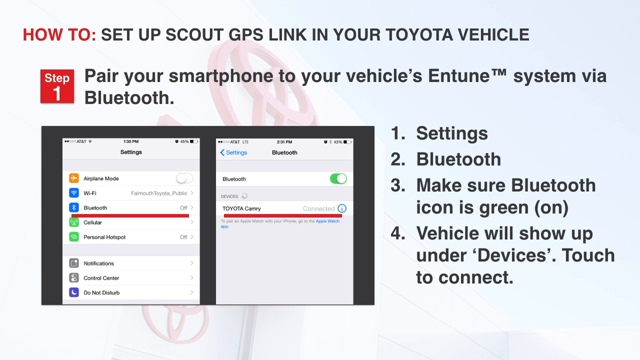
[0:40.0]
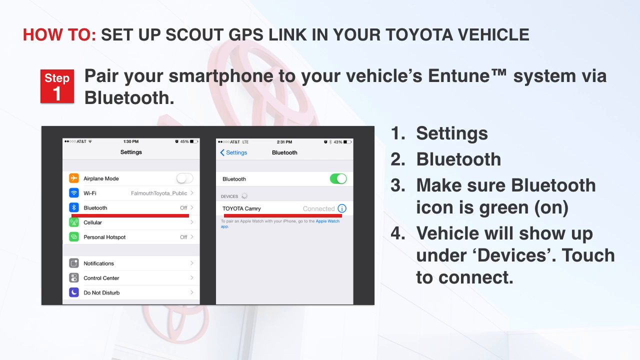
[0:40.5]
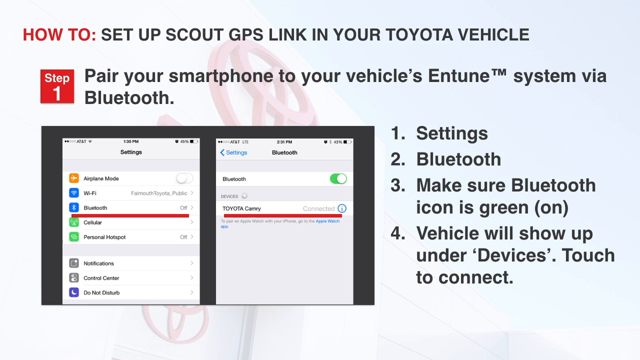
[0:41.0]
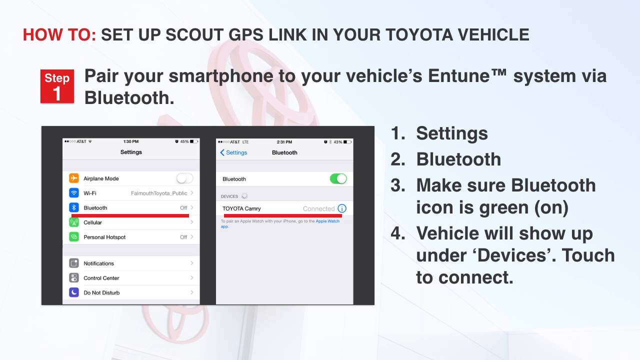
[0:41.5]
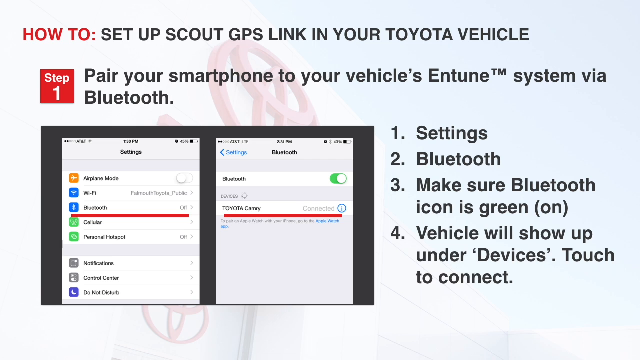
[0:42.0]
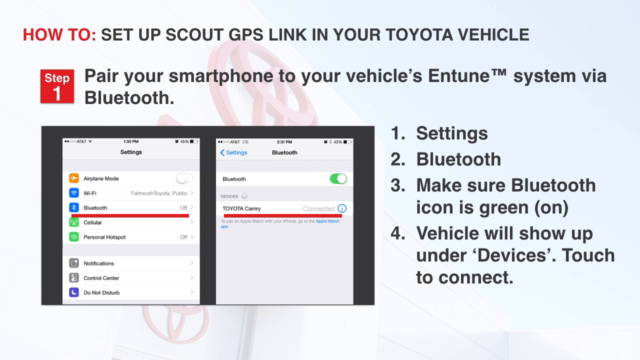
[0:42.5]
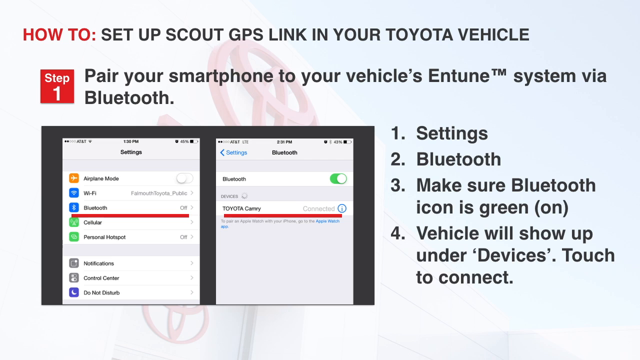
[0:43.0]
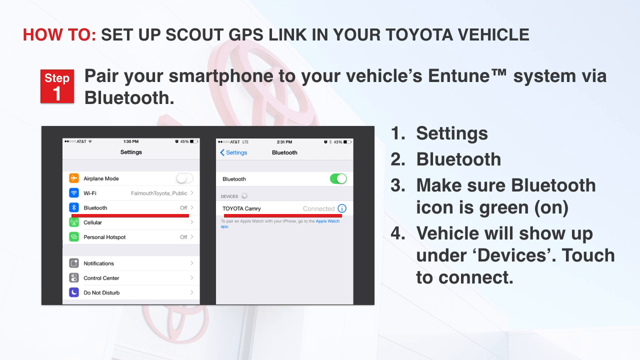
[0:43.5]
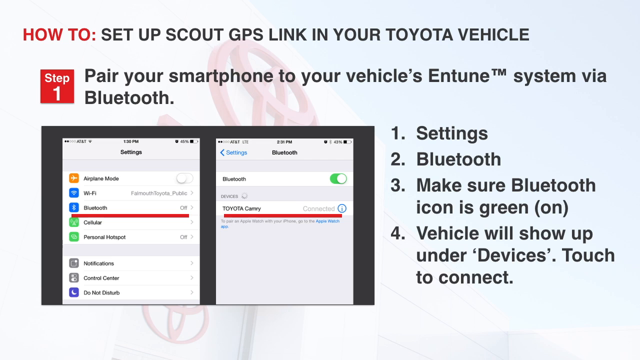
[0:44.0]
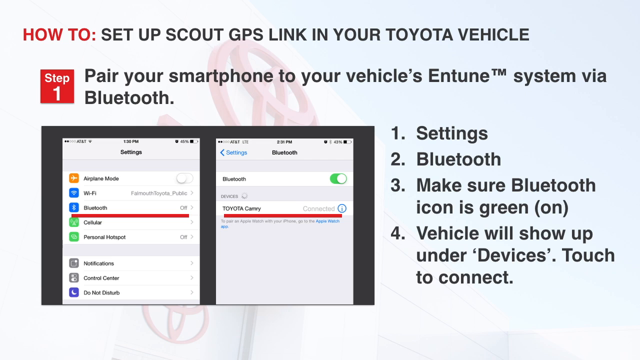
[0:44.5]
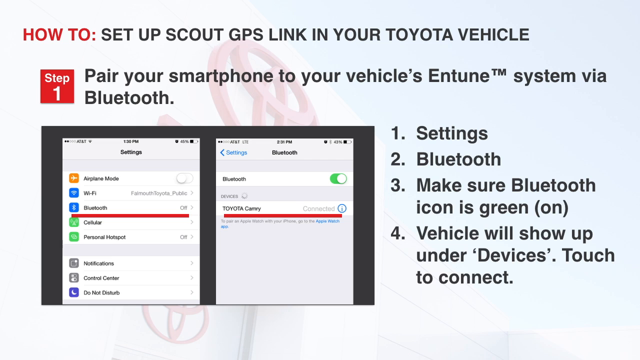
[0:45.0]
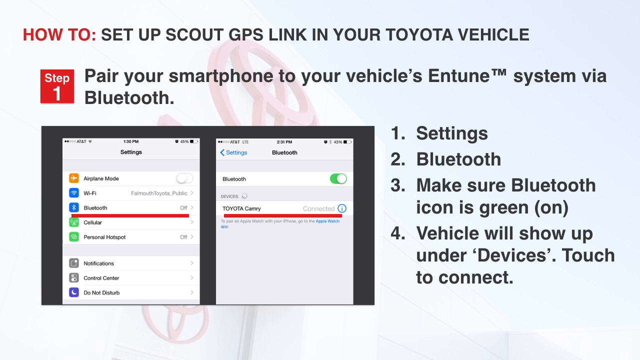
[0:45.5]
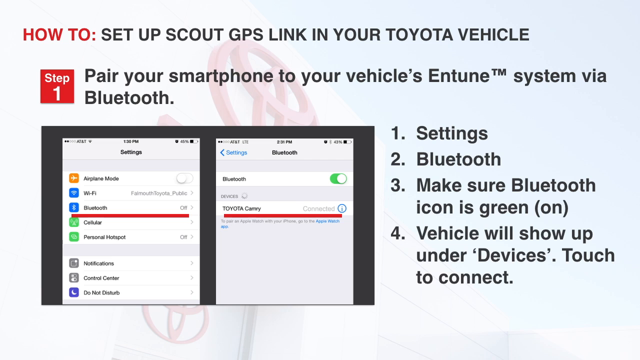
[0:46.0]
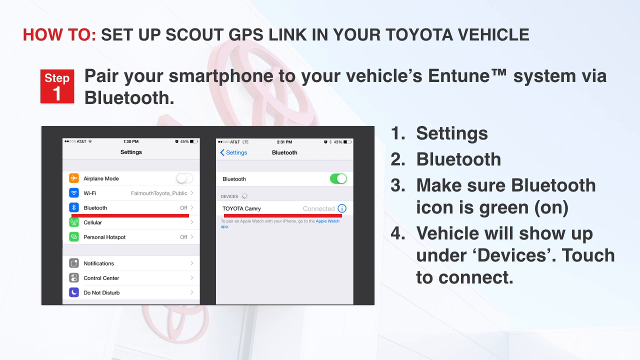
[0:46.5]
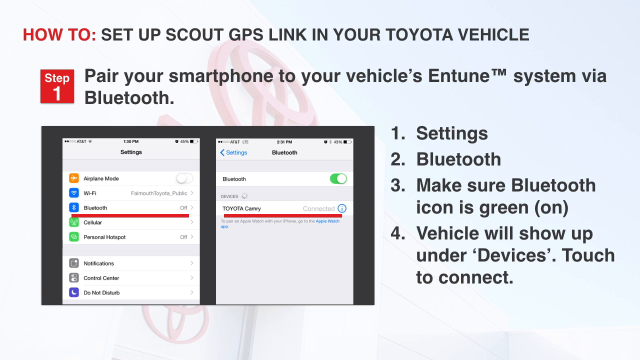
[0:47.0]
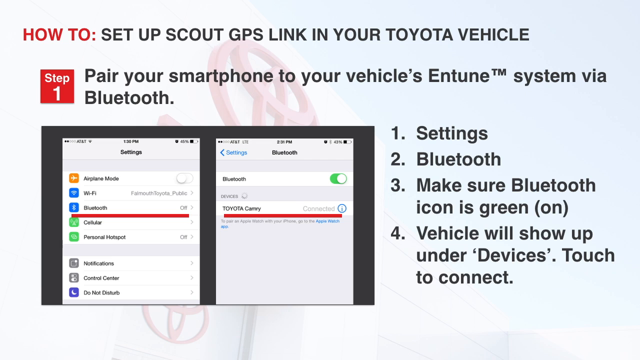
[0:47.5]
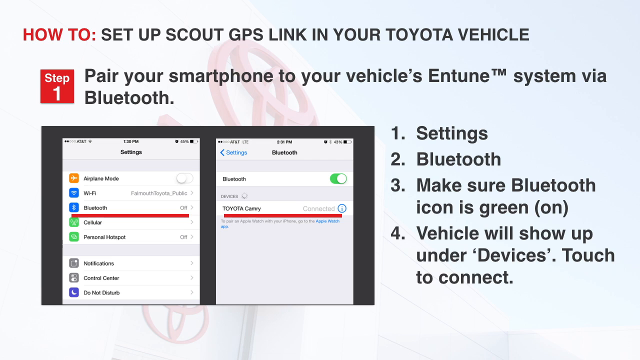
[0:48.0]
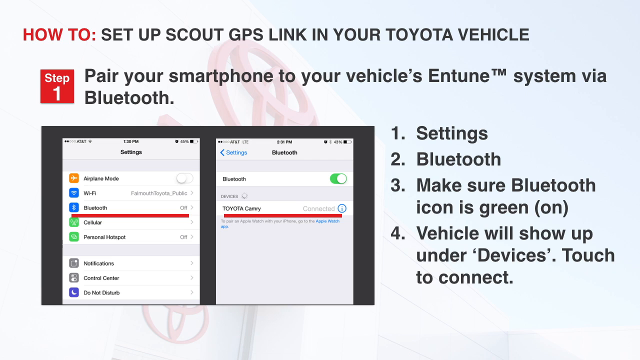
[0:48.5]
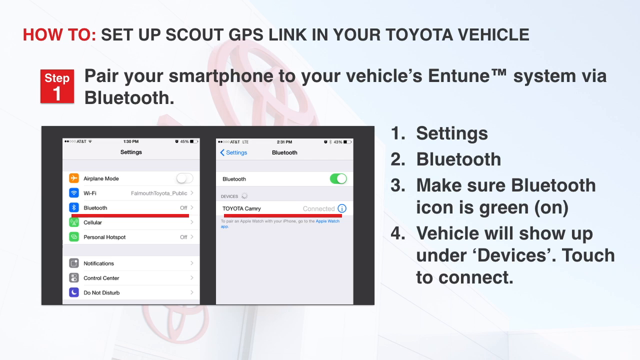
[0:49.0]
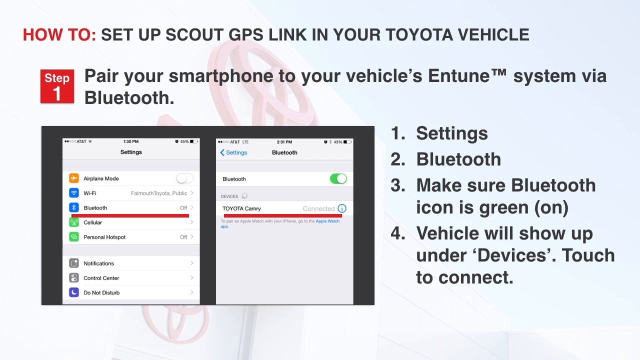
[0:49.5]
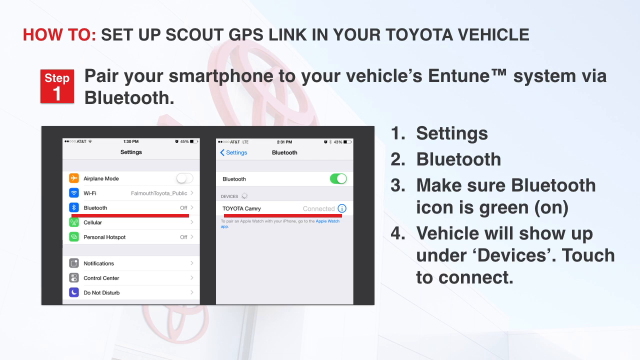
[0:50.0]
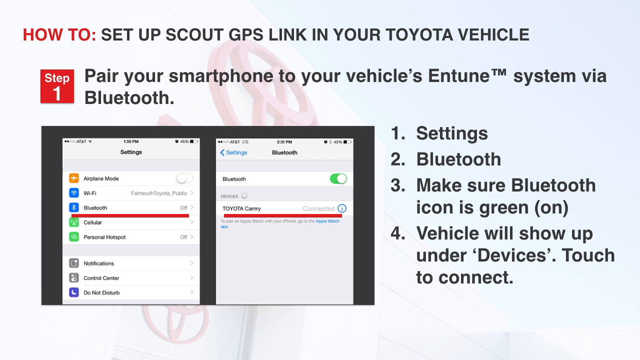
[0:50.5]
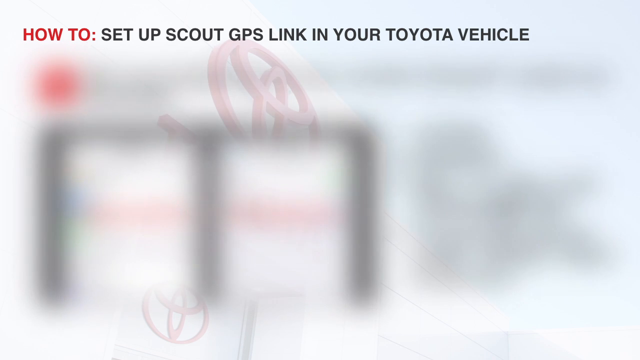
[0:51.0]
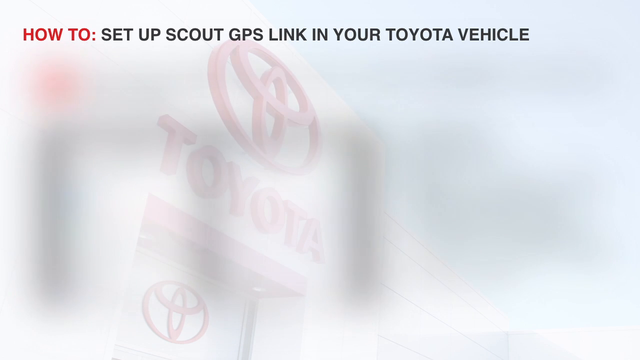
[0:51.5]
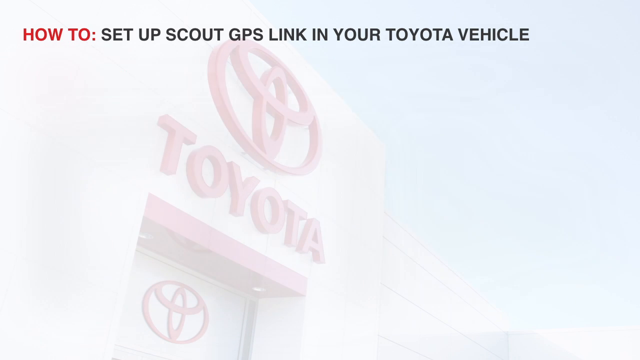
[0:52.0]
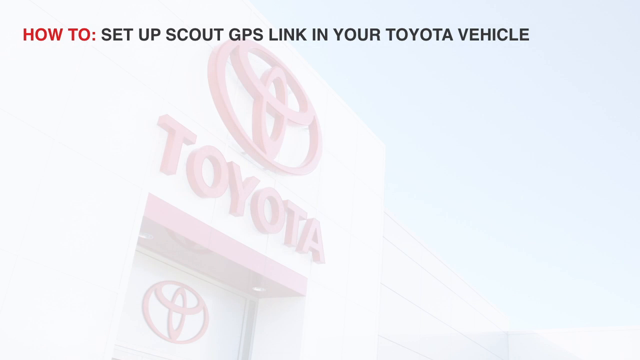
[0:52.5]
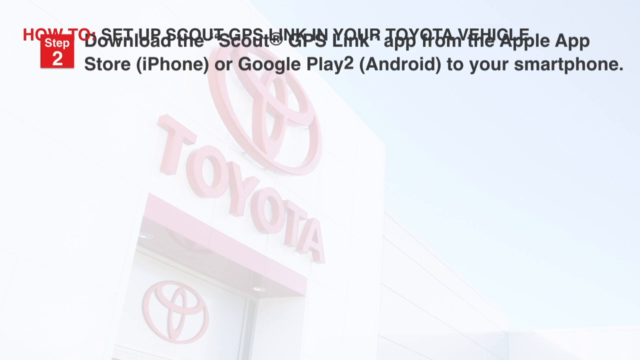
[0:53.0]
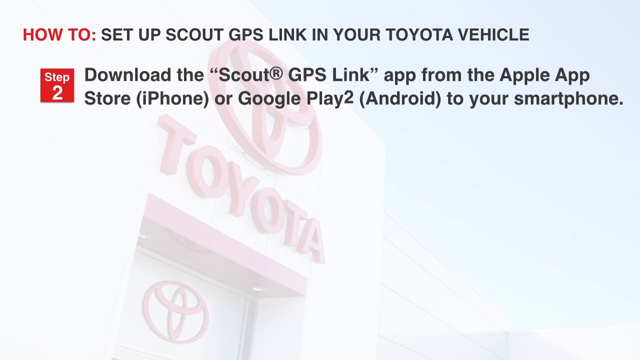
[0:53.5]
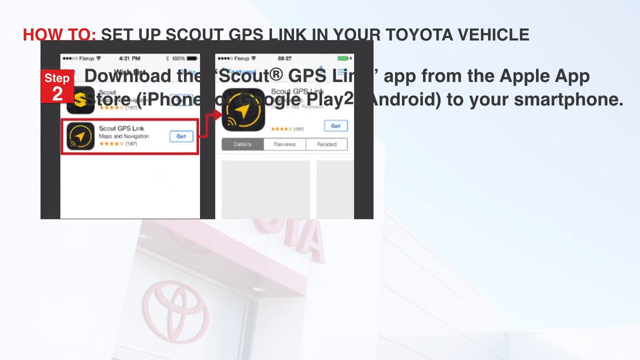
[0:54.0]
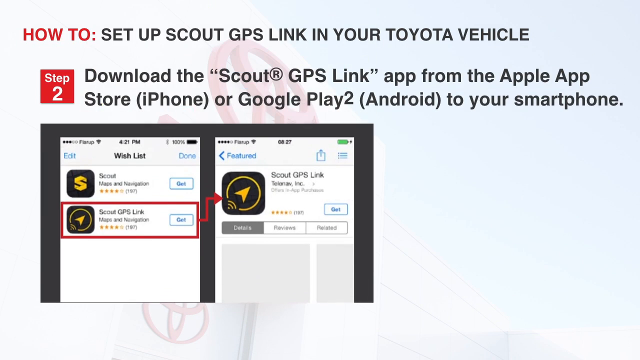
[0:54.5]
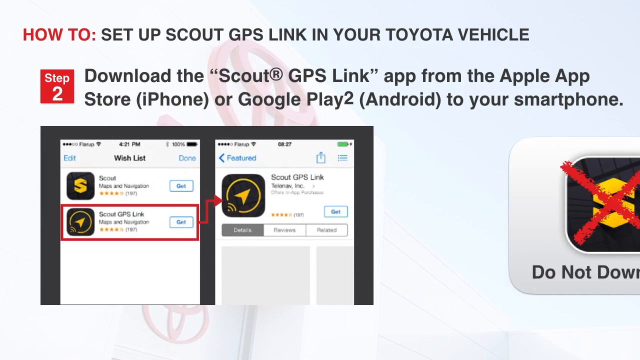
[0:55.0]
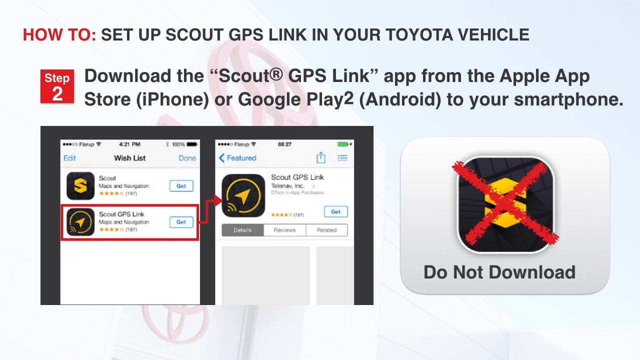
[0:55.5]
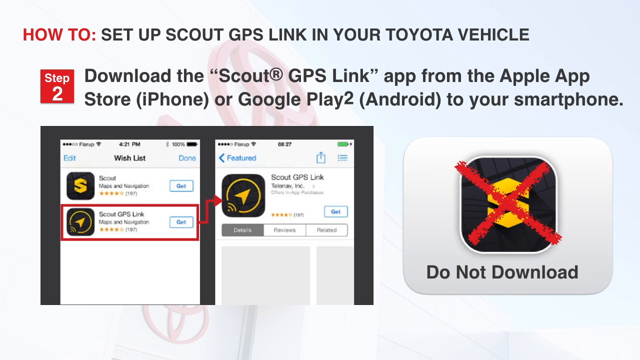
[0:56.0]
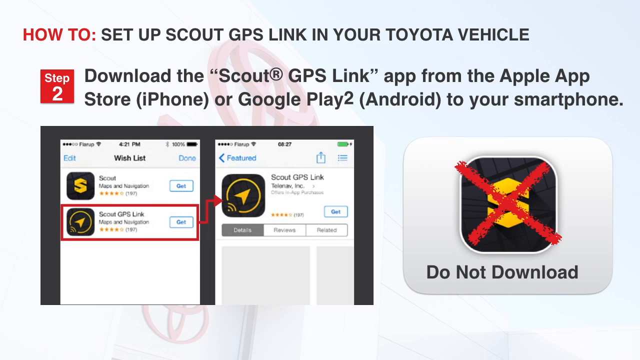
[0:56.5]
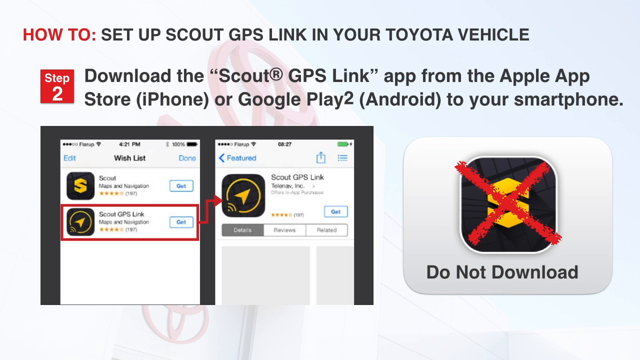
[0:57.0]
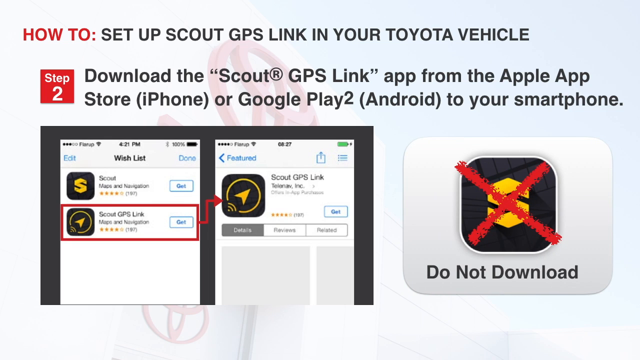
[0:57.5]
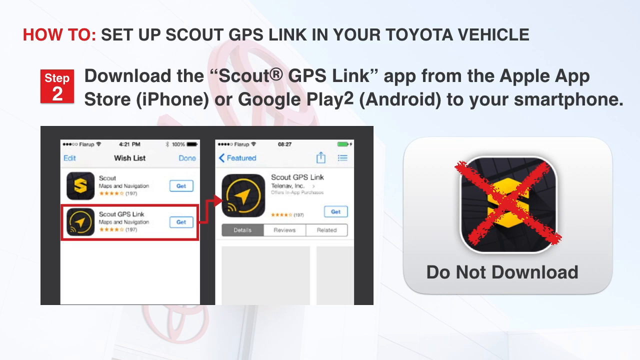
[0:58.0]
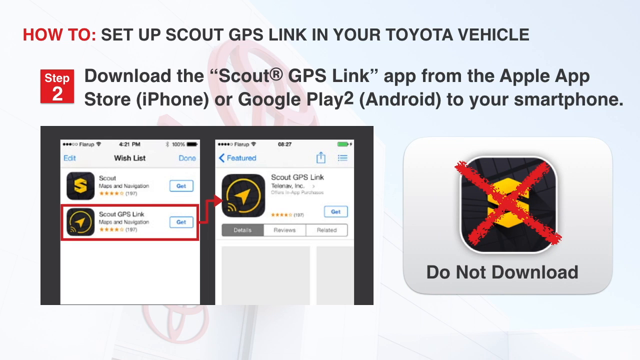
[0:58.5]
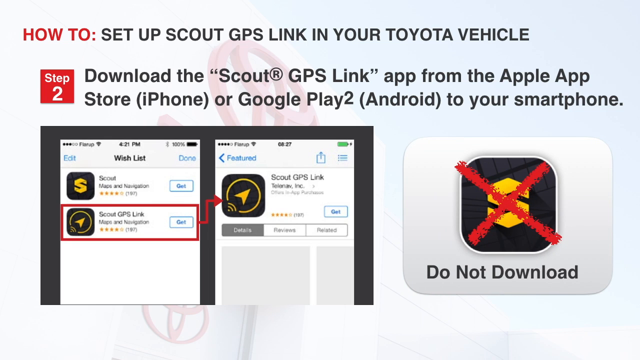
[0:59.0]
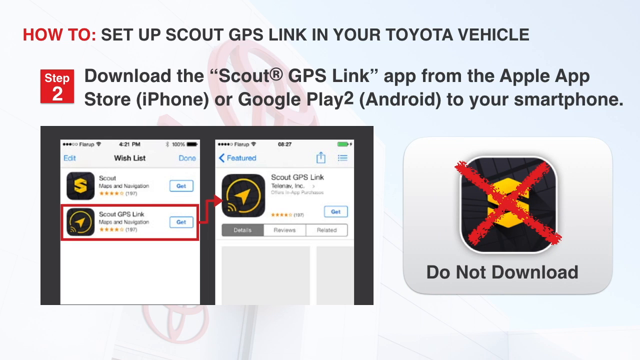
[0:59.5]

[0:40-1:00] The screen shows step one. At the top it reads "how to set up Scout GPS Link in your Toyota vehicle." Below, step one is marked by a red square containing the text "step" and "one," and the text reads "pair your smartphone to your vehicle's Entune TM system via Bluetooth." At the bottom left is a screenshot showing the exact steps described: go to settings, then Bluetooth, make sure the Bluetooth icon is green, meaning it is turned on, and then the vehicle shows up under devices and is touched to connect. Halfway through, the screen changes to step two, which describes something else.